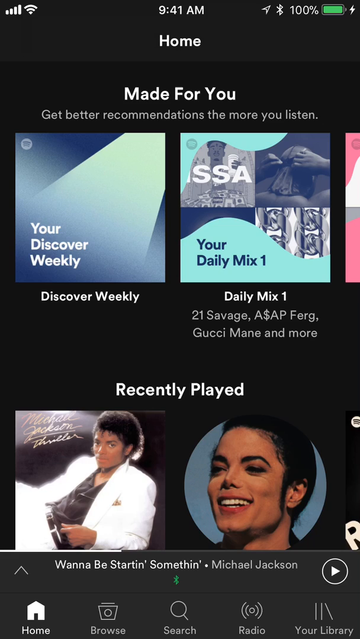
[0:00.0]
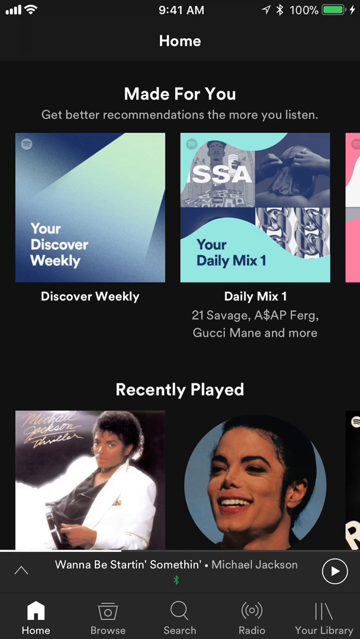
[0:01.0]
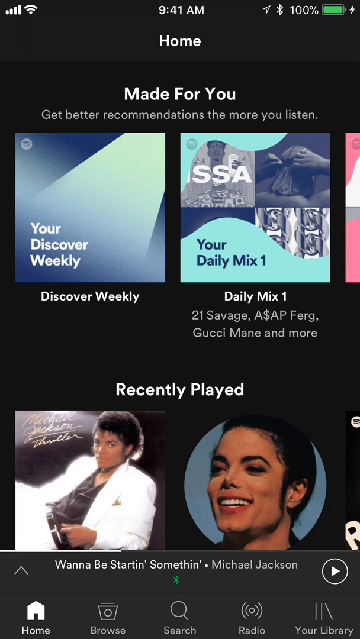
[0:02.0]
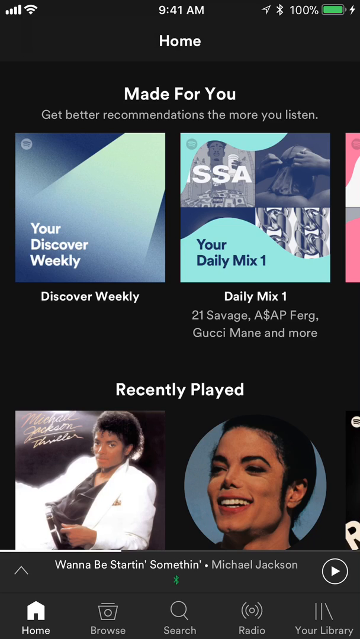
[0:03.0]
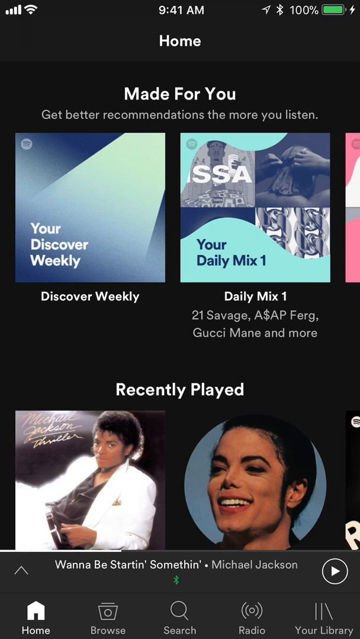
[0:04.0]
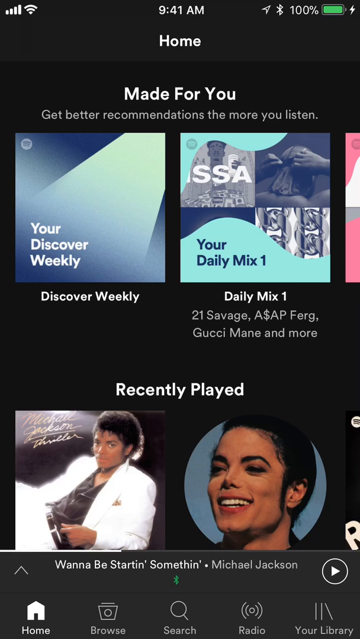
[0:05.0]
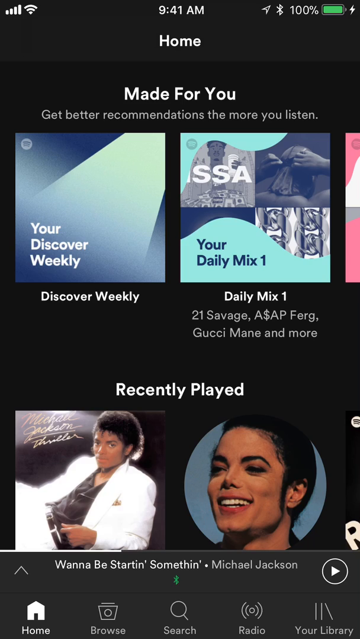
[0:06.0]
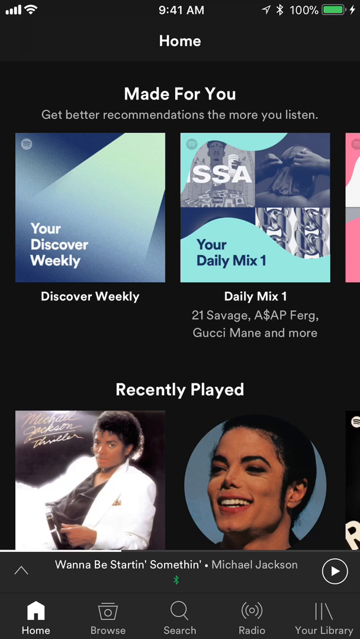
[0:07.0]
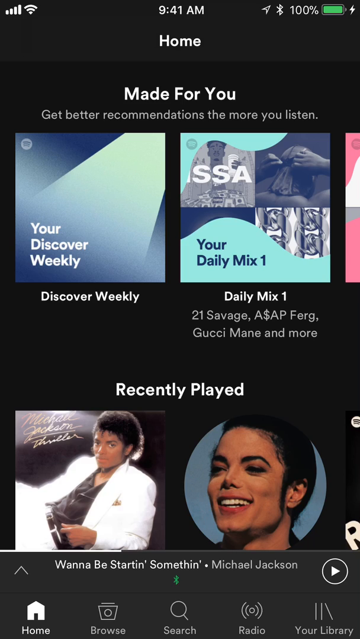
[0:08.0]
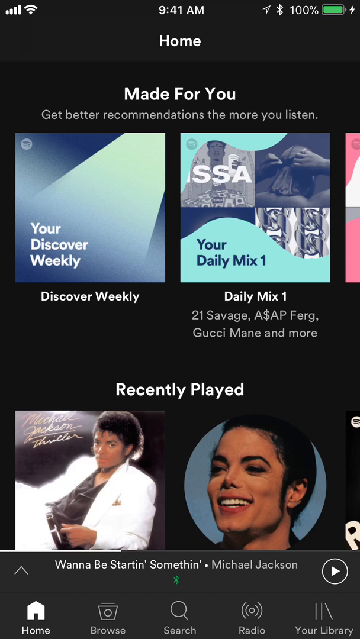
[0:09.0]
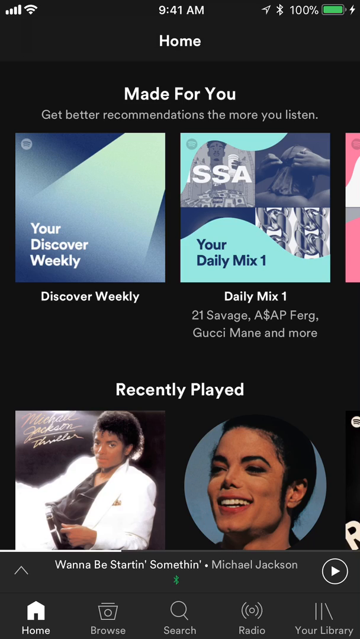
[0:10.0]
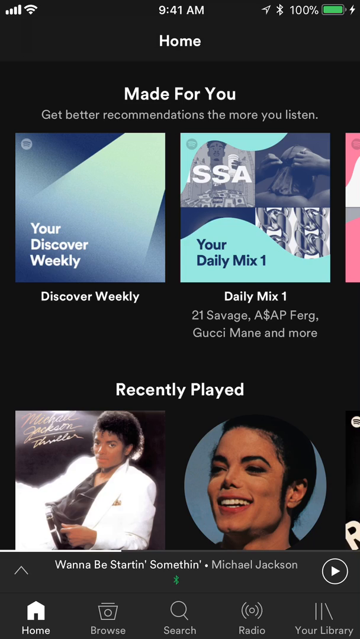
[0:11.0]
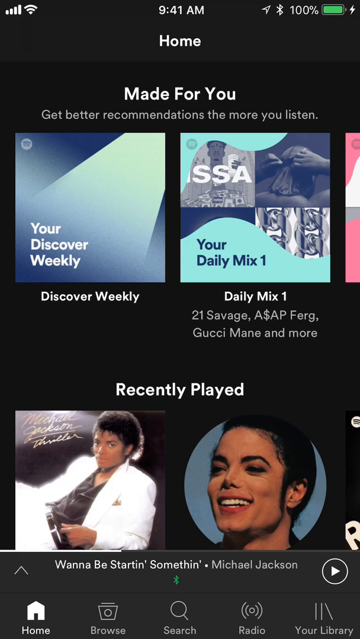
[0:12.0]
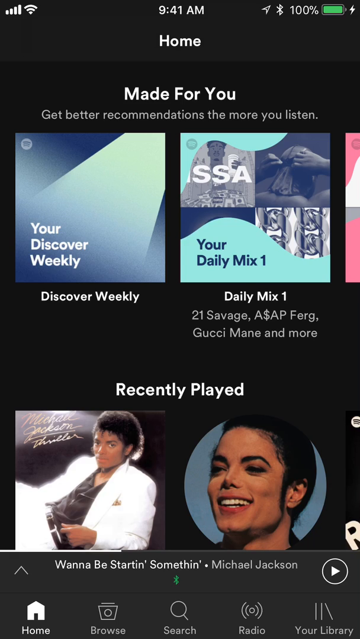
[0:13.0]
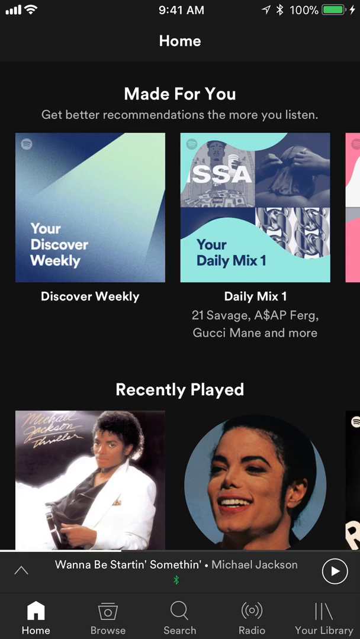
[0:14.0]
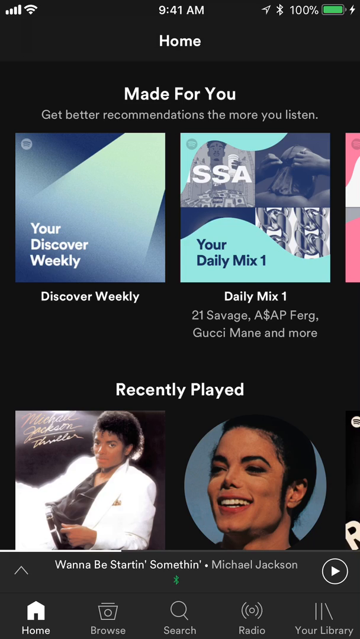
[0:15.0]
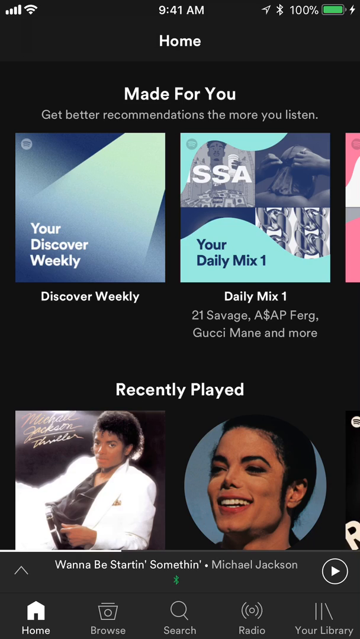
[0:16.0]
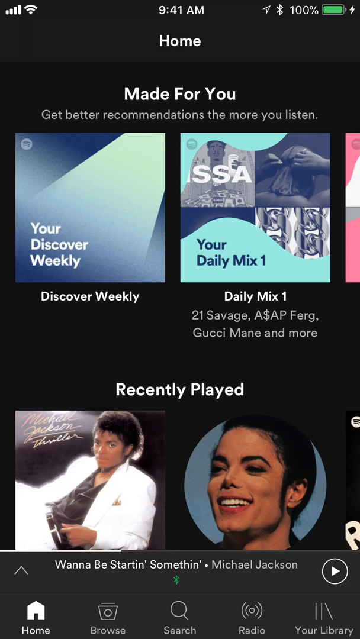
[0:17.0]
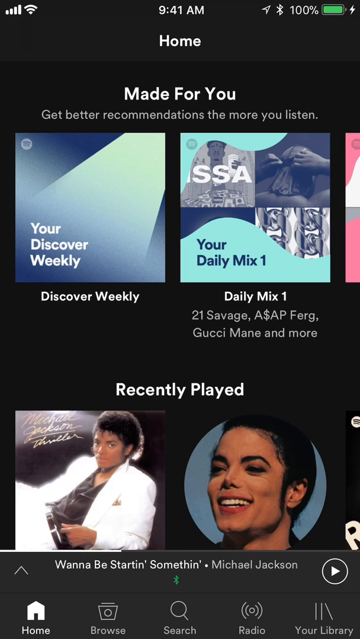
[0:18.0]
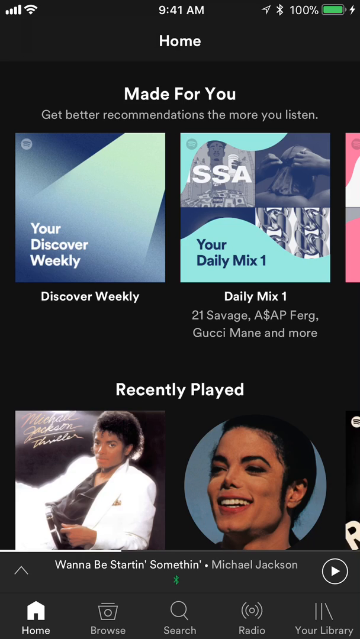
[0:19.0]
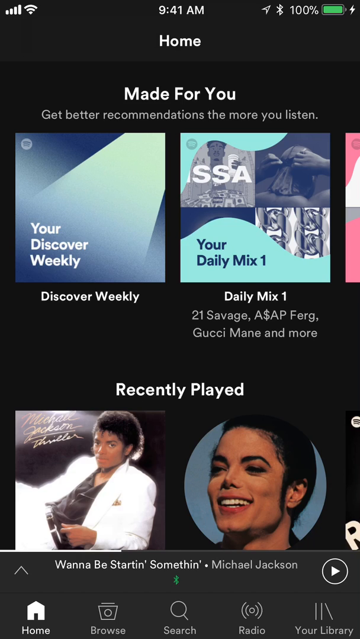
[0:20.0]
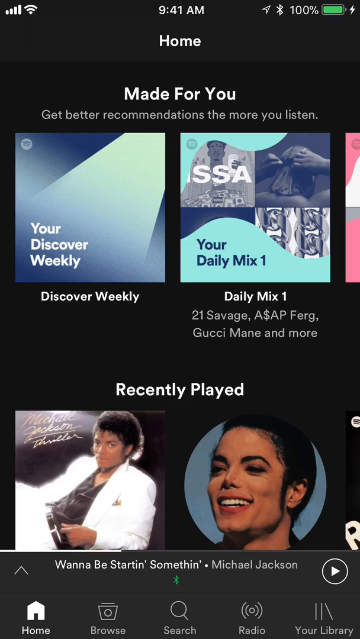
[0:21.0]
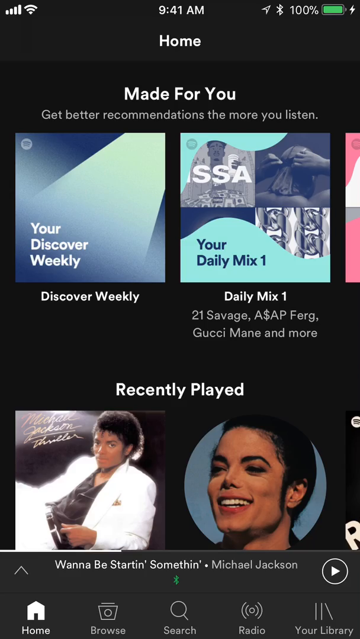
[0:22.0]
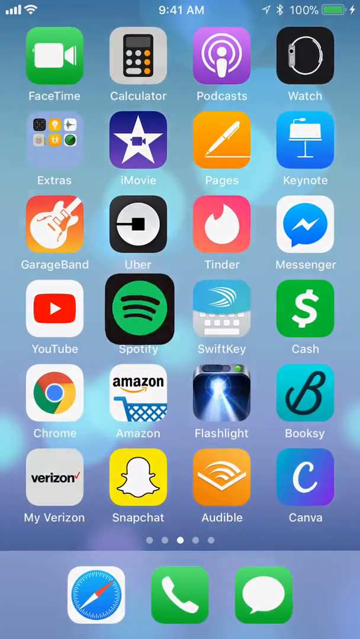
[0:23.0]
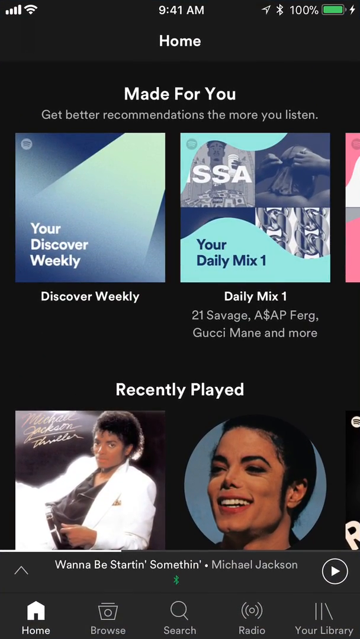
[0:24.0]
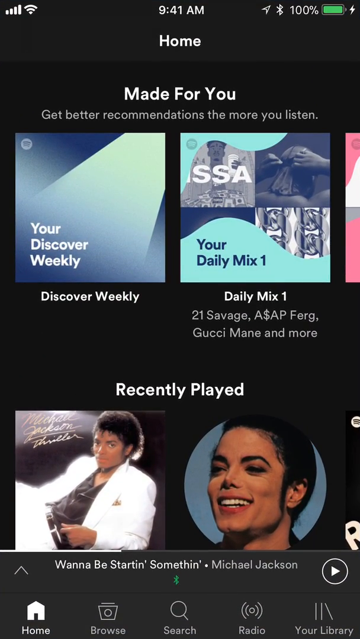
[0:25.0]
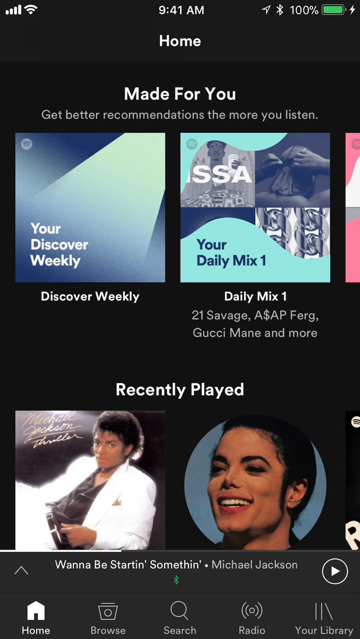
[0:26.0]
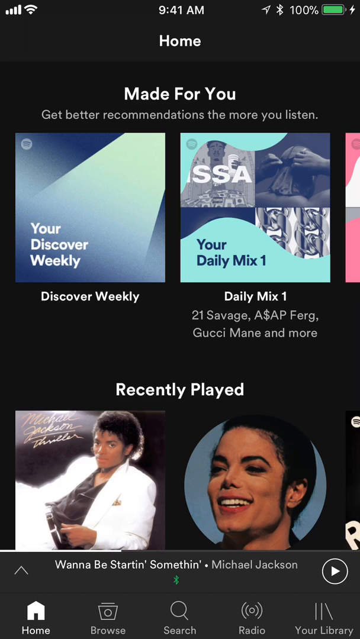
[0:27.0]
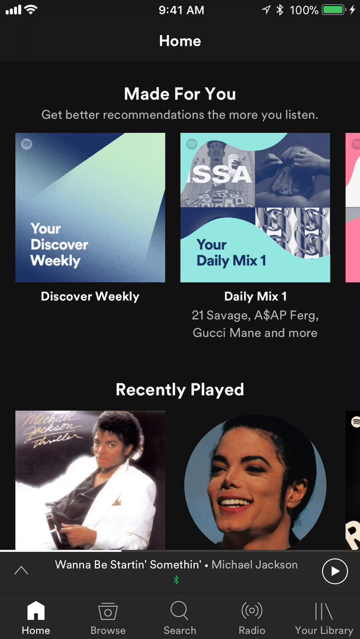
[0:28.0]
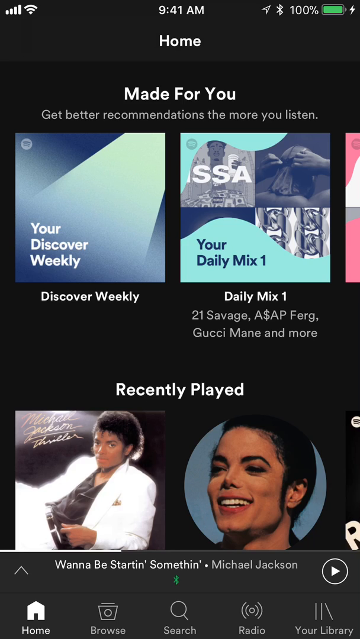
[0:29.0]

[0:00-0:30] The screen shows the homepage of a streaming service, which looks like Spotify, though it is not certain which service it is. The song currently playing is probably Wannabe Startin' Somethin' by Michael Jackson, and Michael Jackson appears under the recently played section. Just above that are "Made for you" and "Better recommendations the more you listen." Below these there is a tab for Discover Weekly and another tab for Daily Mix 1; one of the daily mix recommendations is a mix of 21 Savage, ASAP Ferg, Gucci Mane and more. At the bottom there appear to be multiple Michael Jackson items that were played, and the pictures of Michael Jackson are from his older albums. The homepage has a black background, and there is a menu at the bottom with a search magnifying glass and a home page button.